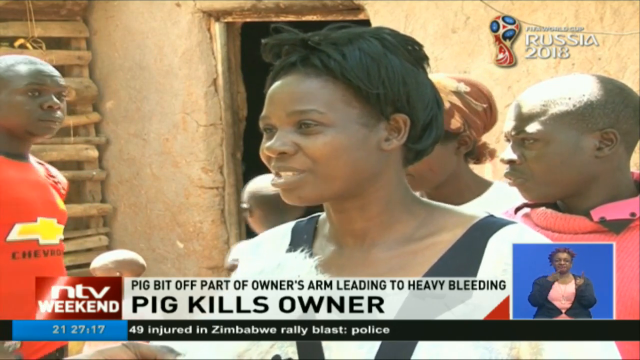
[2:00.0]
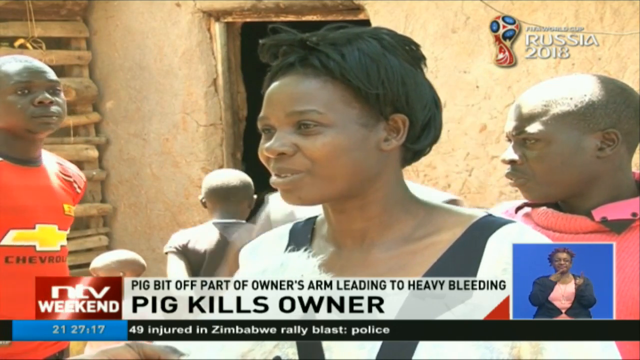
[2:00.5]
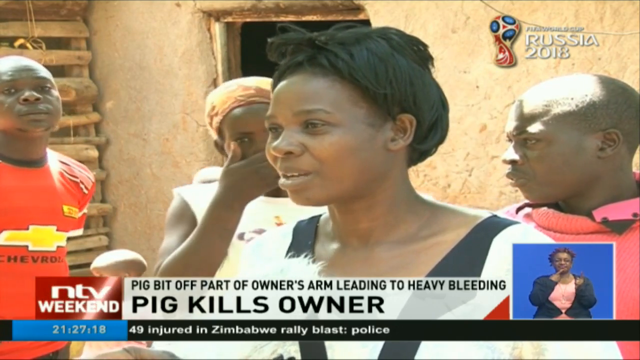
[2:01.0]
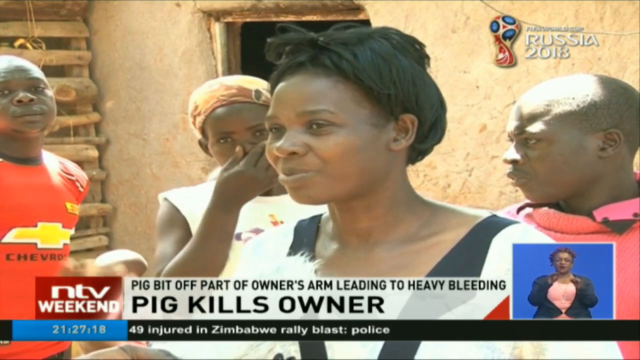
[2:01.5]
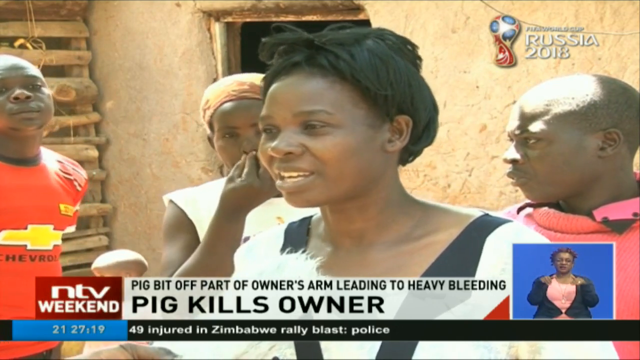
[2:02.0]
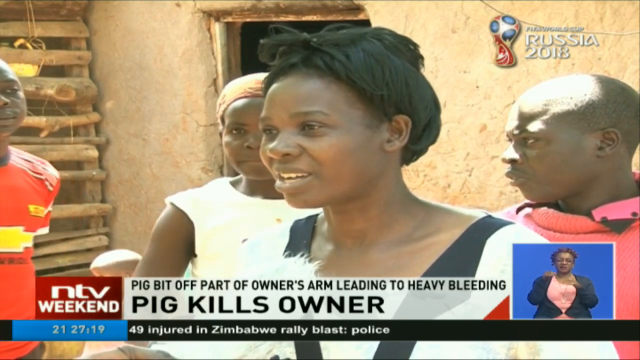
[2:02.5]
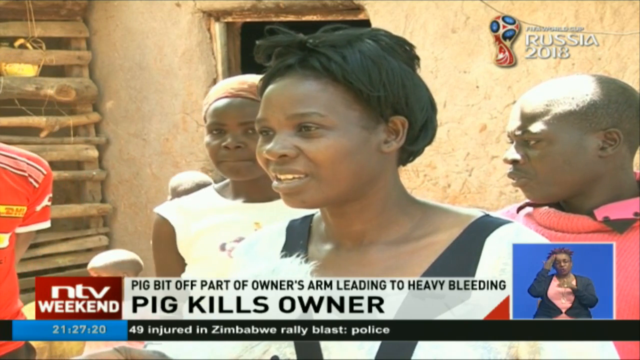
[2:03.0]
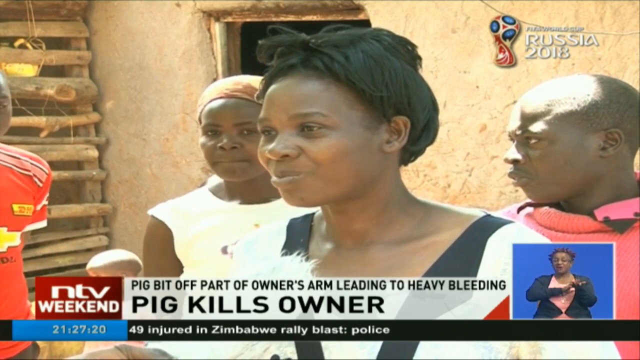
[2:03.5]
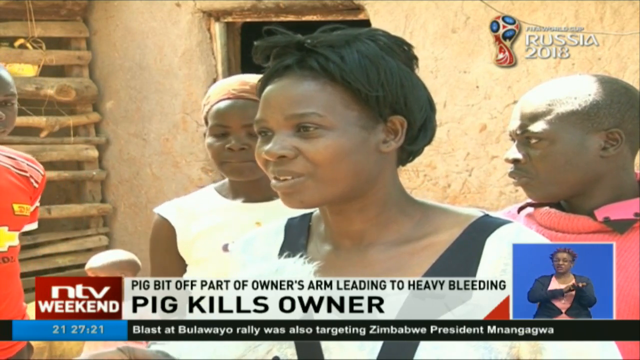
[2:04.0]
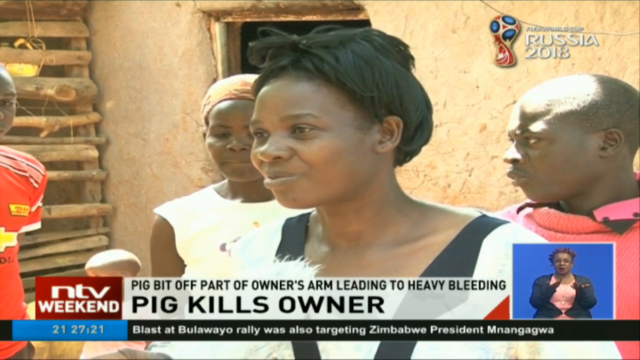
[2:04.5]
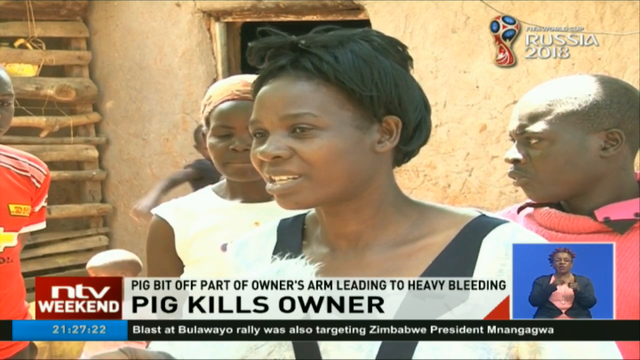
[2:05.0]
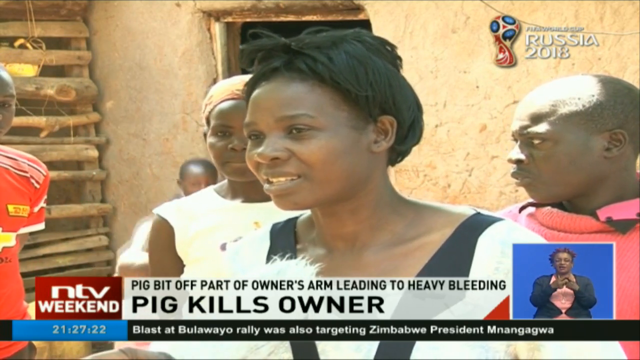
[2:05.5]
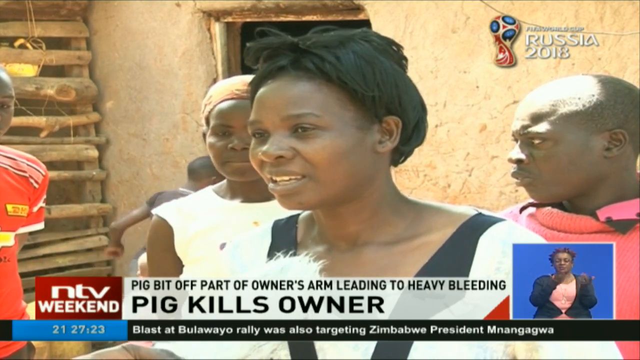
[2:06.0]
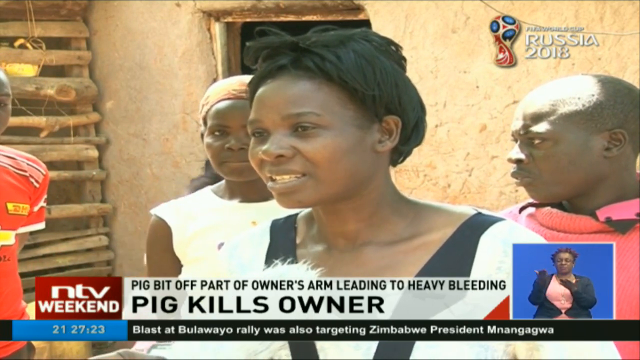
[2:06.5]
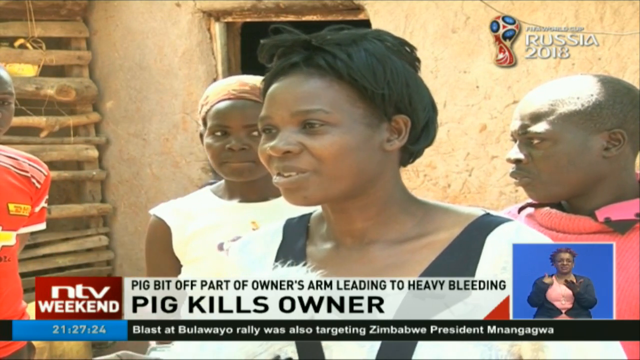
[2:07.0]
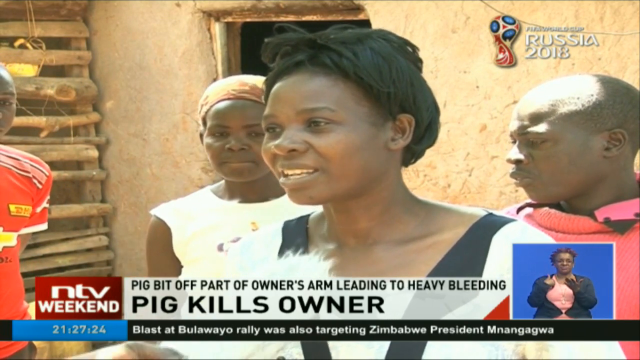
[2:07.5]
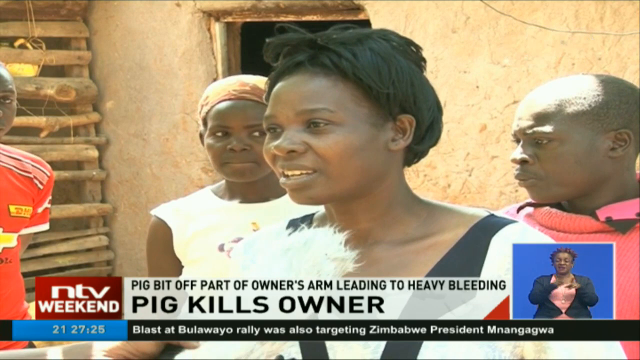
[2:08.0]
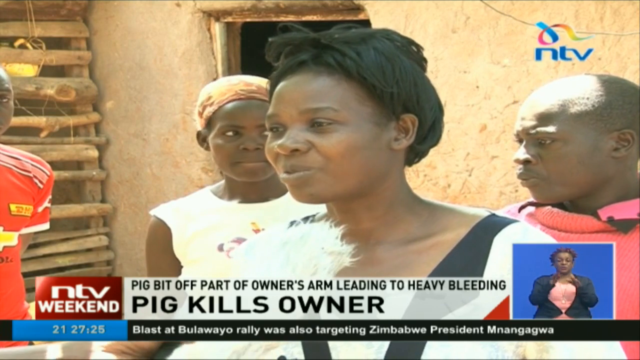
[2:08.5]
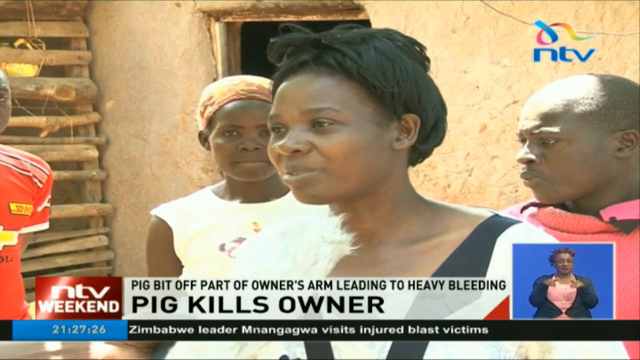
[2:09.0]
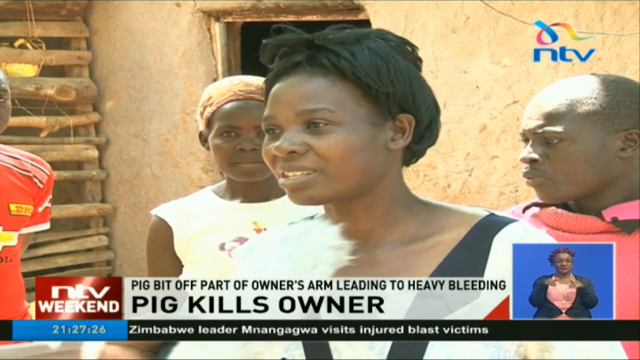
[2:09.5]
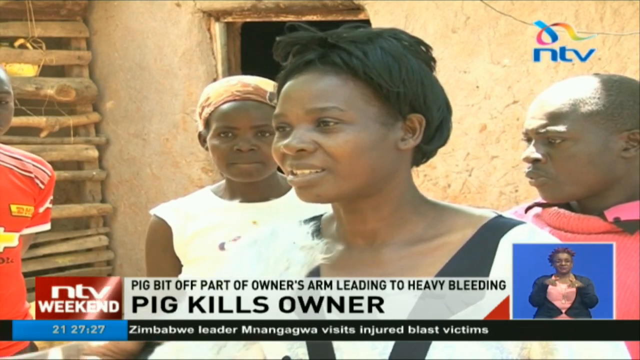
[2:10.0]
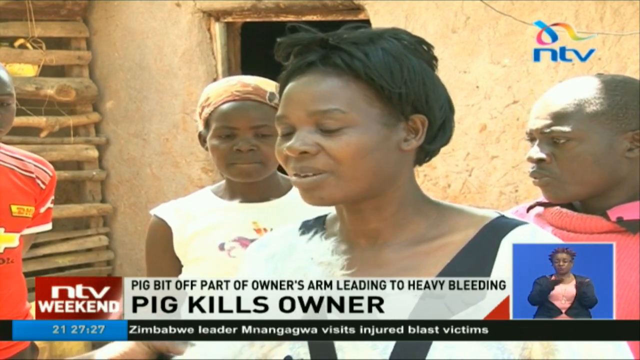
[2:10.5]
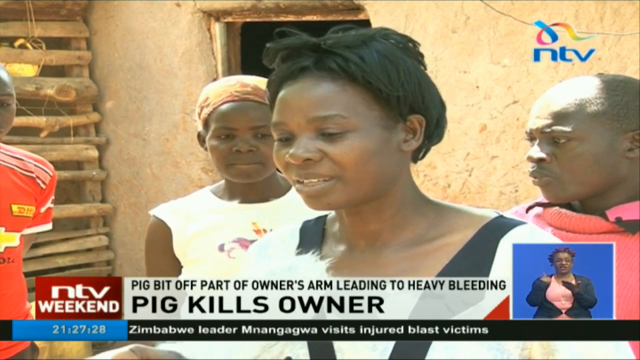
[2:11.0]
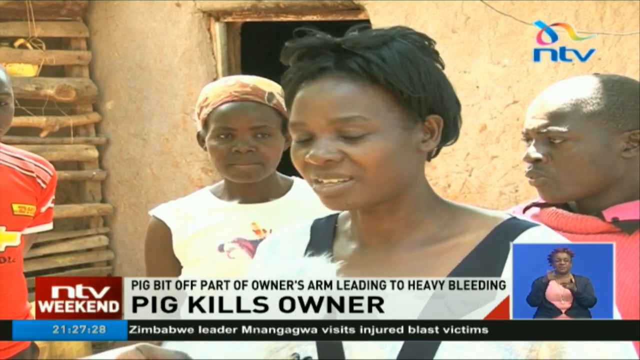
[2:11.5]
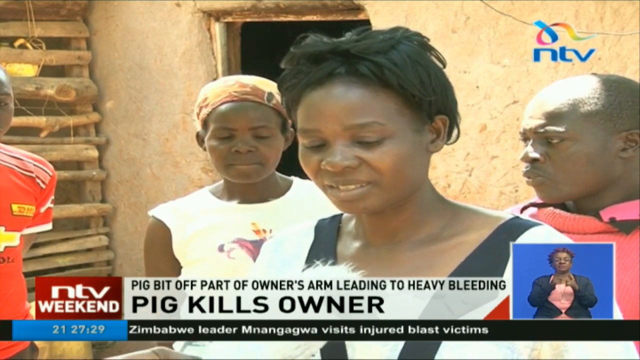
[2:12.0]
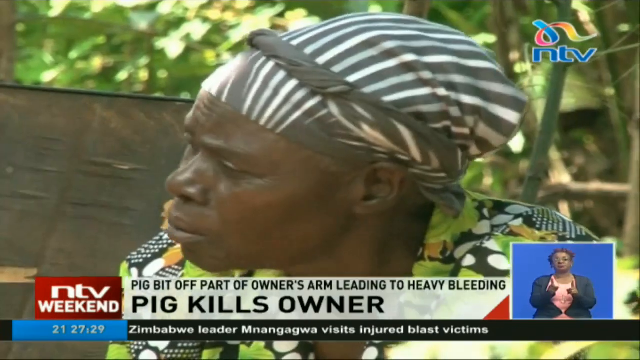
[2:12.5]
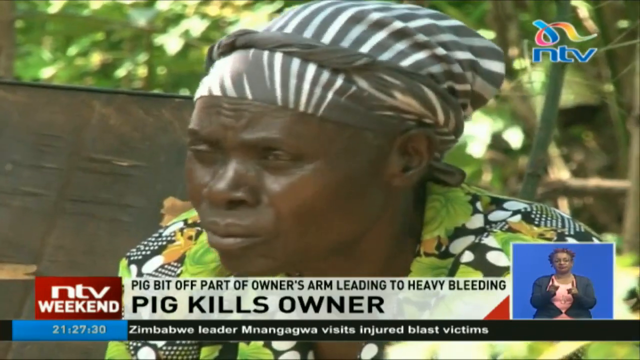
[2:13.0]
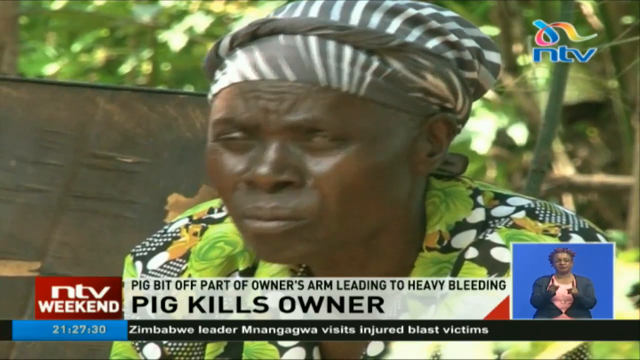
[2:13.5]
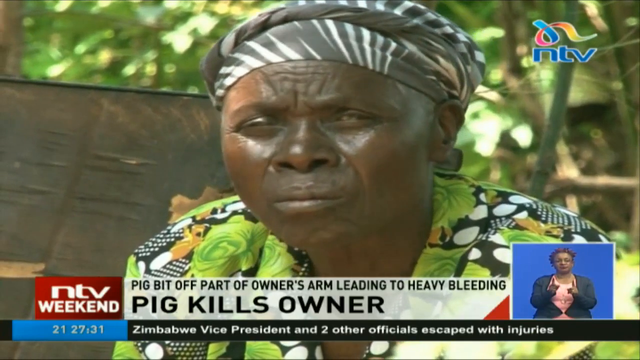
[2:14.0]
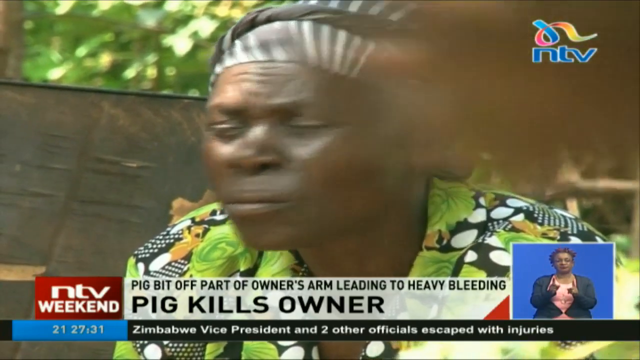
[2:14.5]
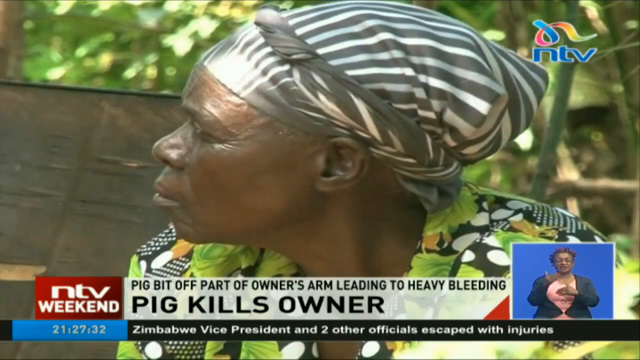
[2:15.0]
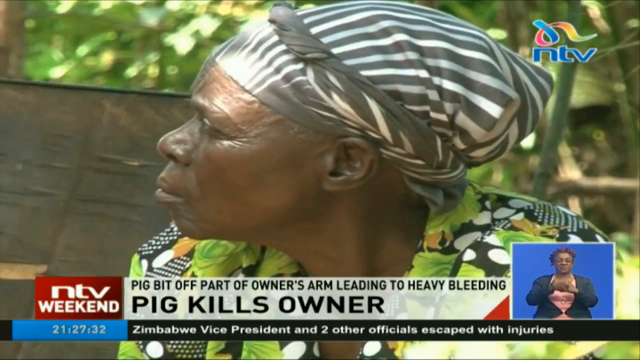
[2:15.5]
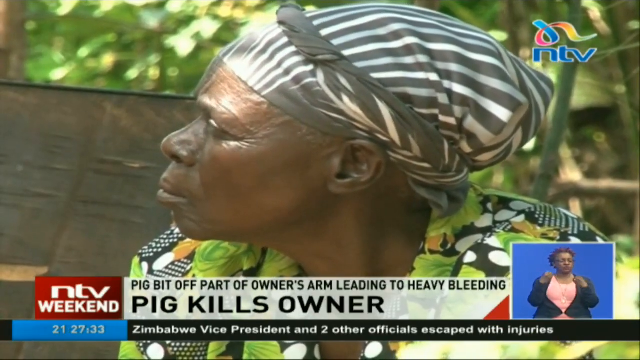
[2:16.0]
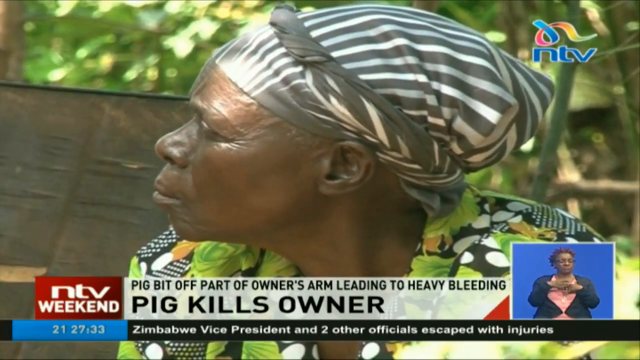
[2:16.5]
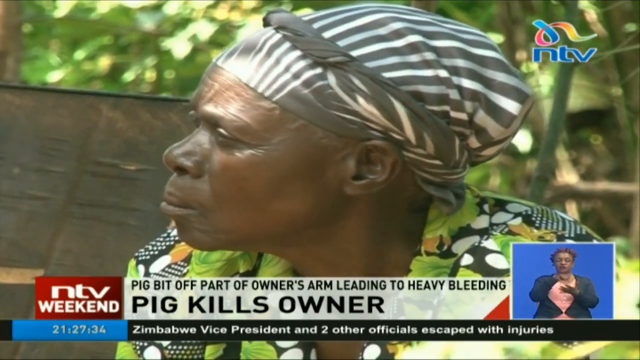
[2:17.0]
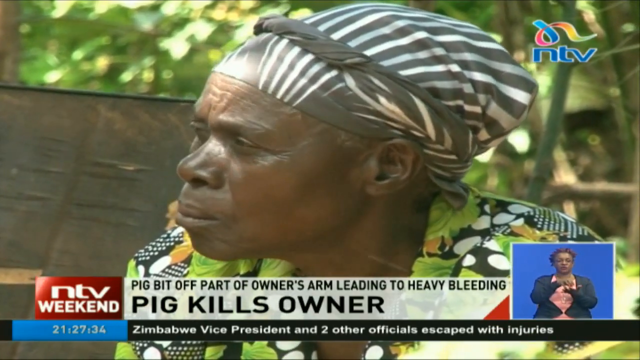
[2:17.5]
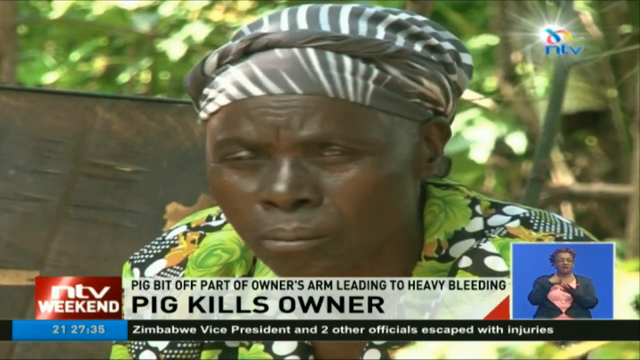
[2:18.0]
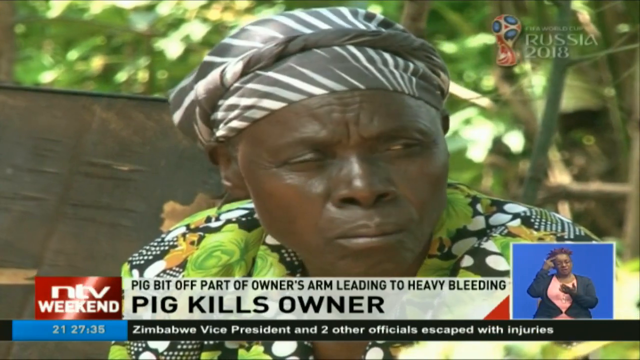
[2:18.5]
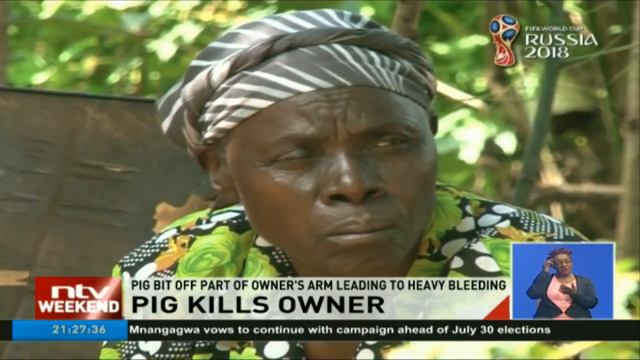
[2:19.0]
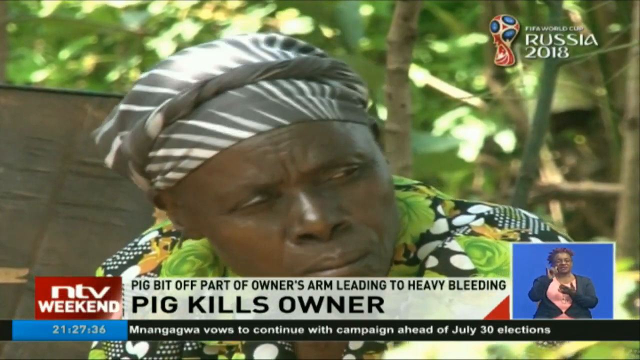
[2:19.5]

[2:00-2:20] The interview with the widow, Jentrix Werunga, continues. No sadness is visible on her face; she appears calm, possibly still in shock. Later an old woman is shown, wearing a multicoloured dress that is mostly green and a striped headscarf in brown and cream white.